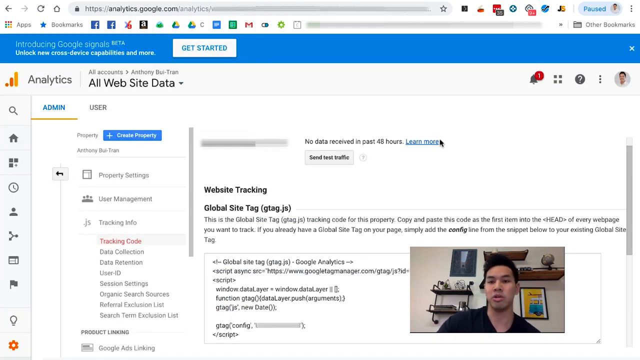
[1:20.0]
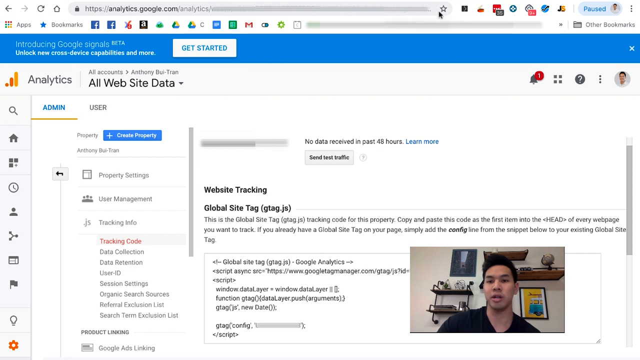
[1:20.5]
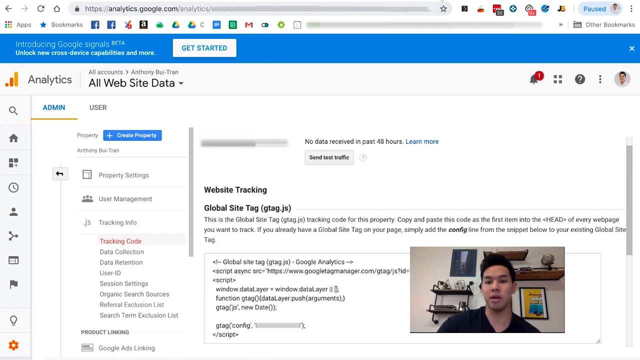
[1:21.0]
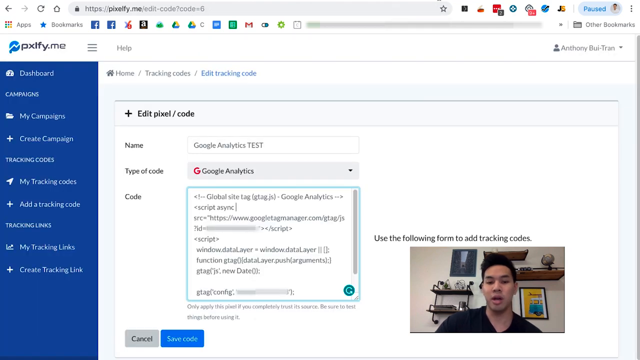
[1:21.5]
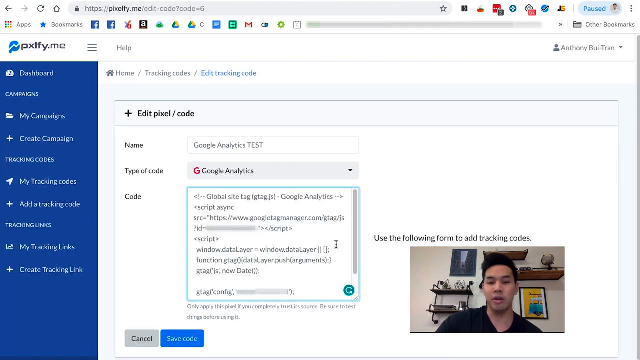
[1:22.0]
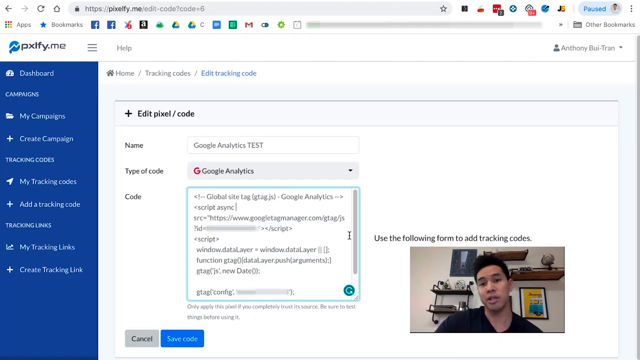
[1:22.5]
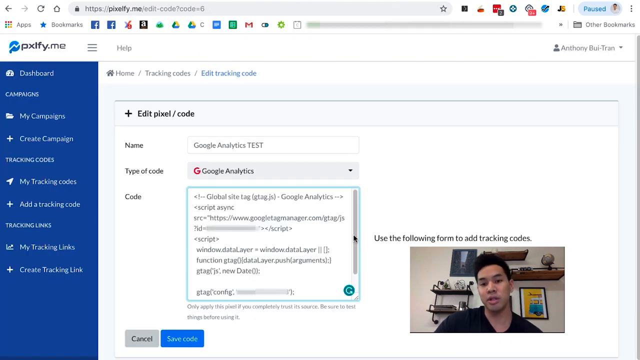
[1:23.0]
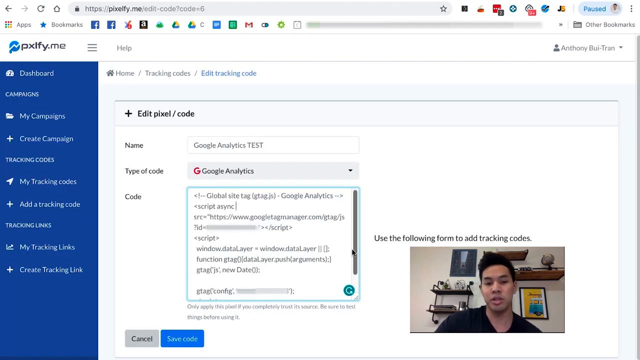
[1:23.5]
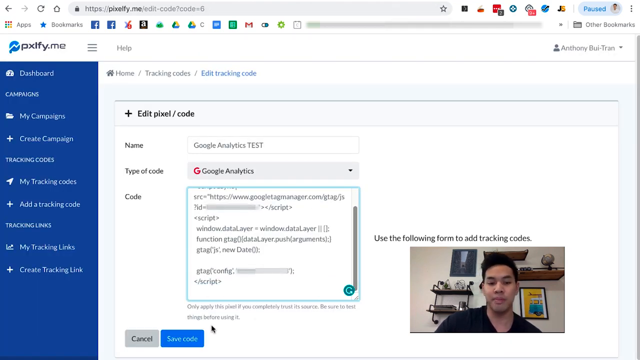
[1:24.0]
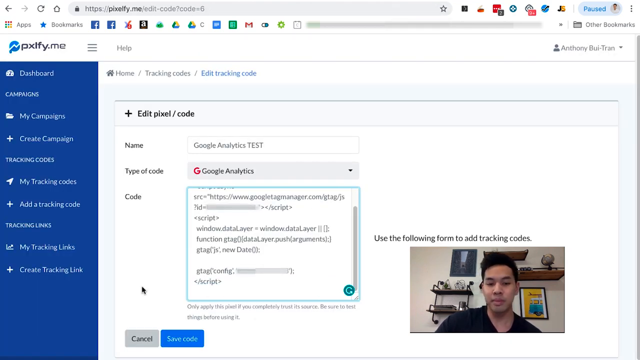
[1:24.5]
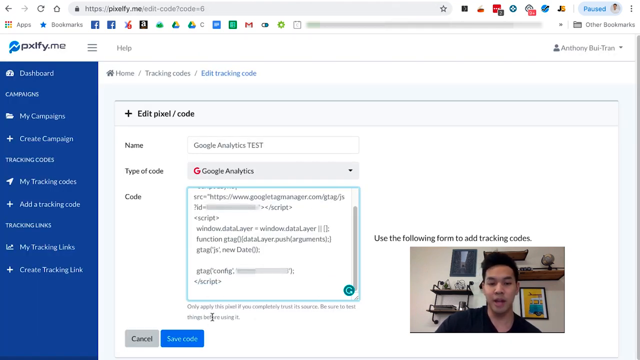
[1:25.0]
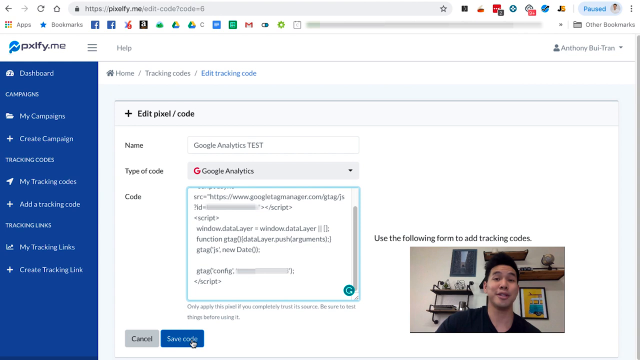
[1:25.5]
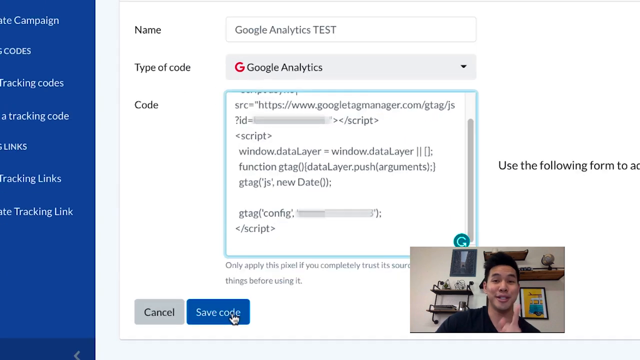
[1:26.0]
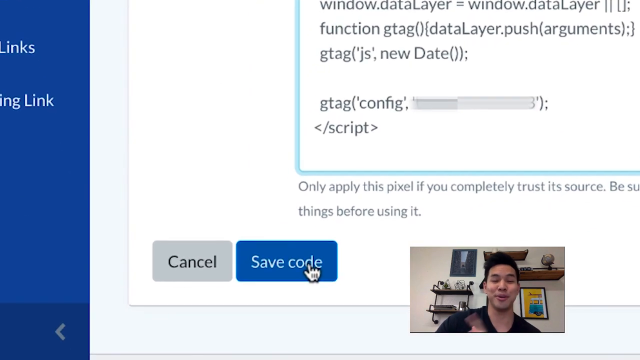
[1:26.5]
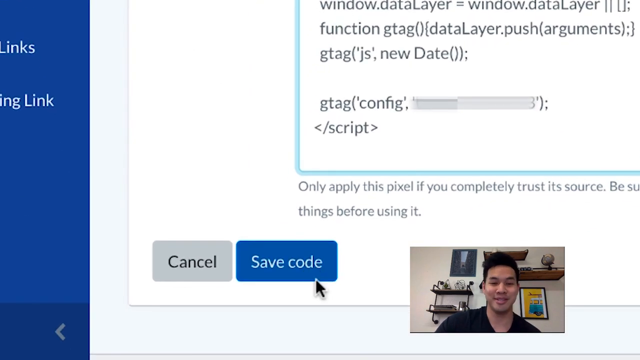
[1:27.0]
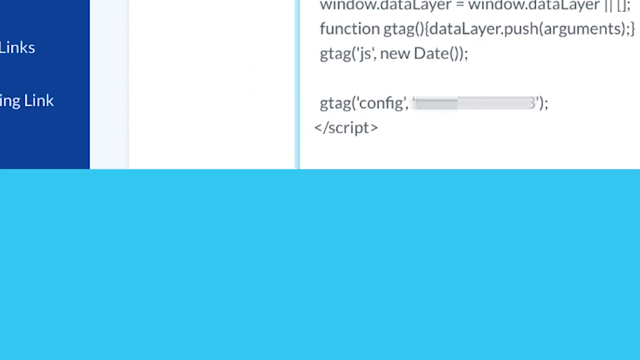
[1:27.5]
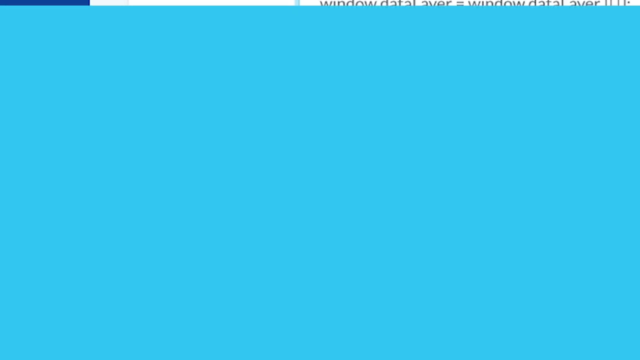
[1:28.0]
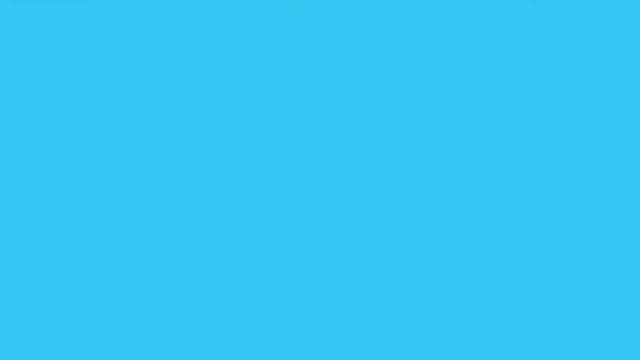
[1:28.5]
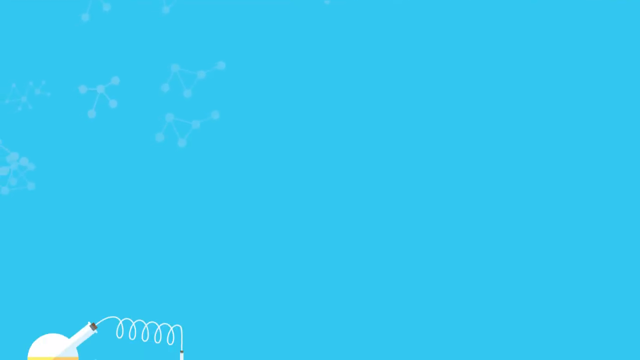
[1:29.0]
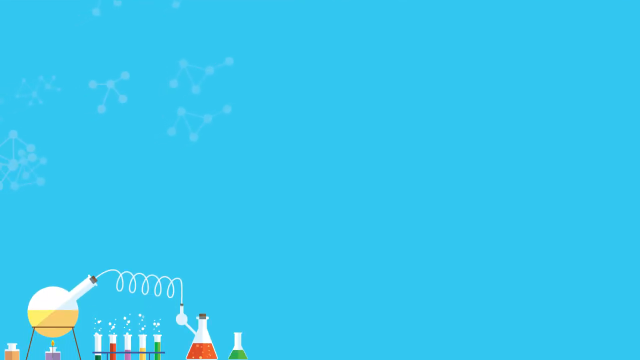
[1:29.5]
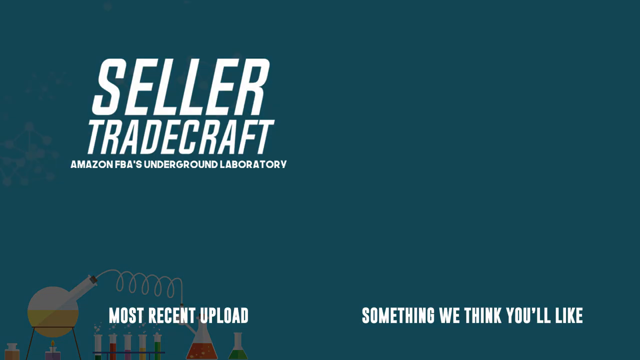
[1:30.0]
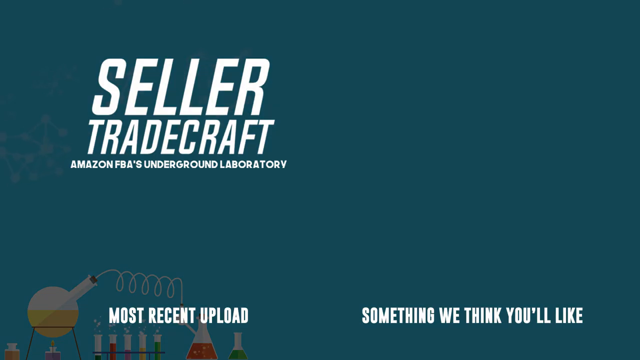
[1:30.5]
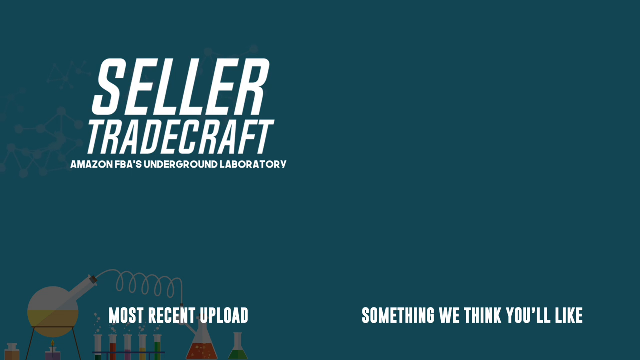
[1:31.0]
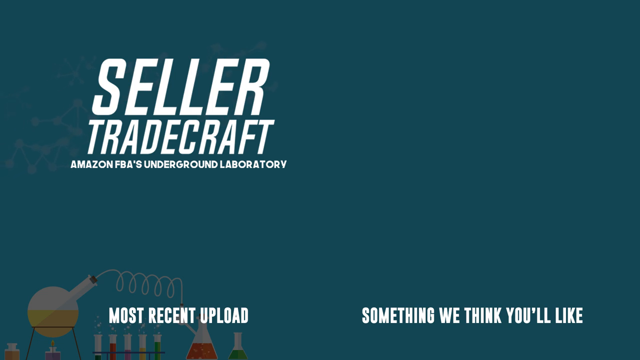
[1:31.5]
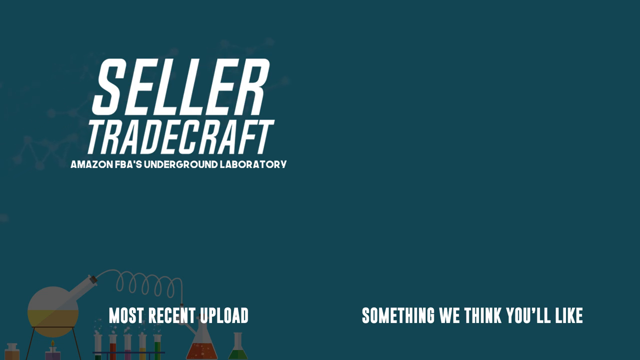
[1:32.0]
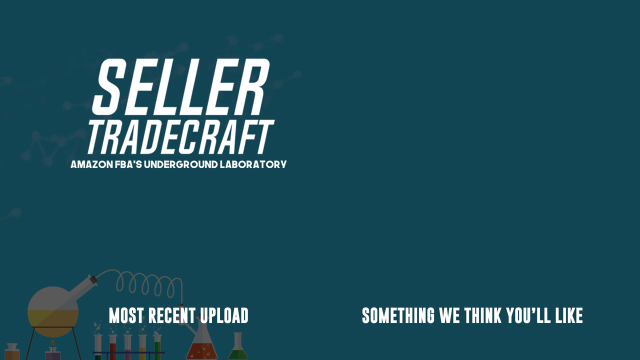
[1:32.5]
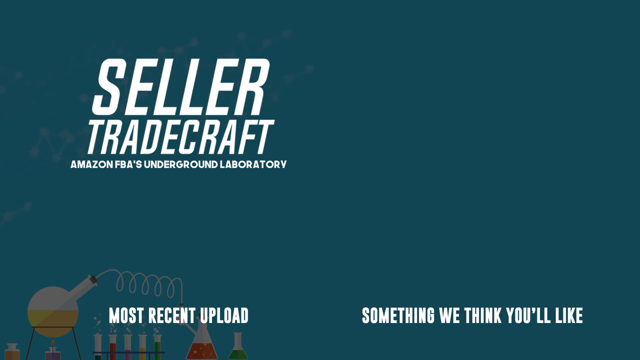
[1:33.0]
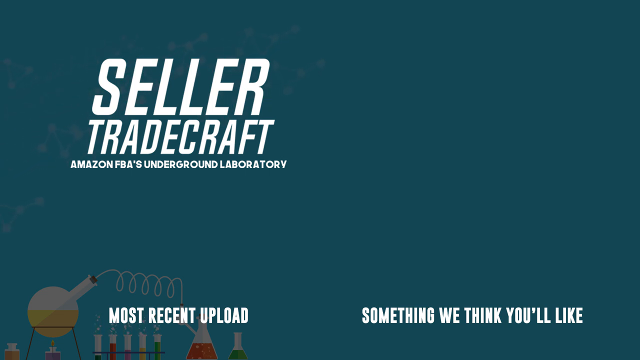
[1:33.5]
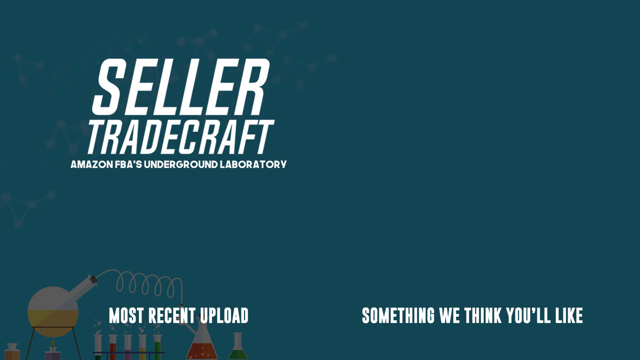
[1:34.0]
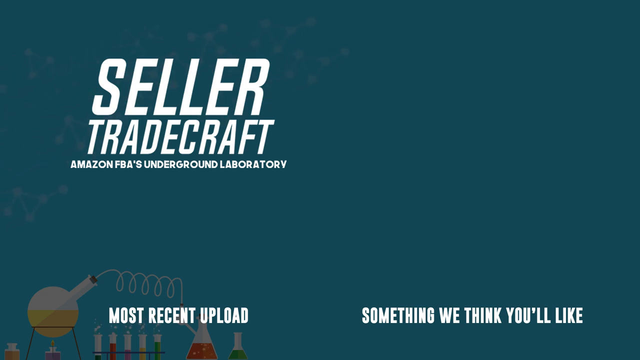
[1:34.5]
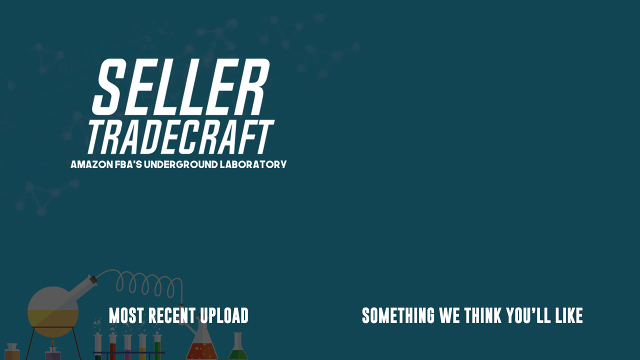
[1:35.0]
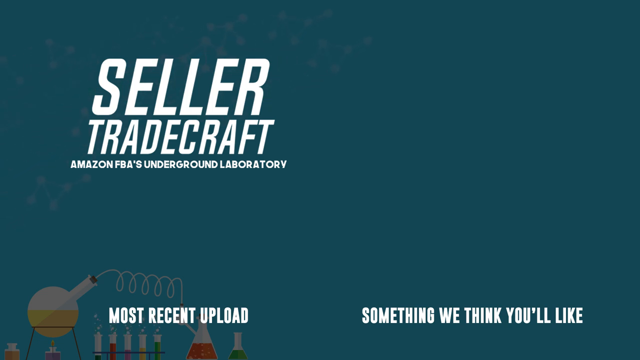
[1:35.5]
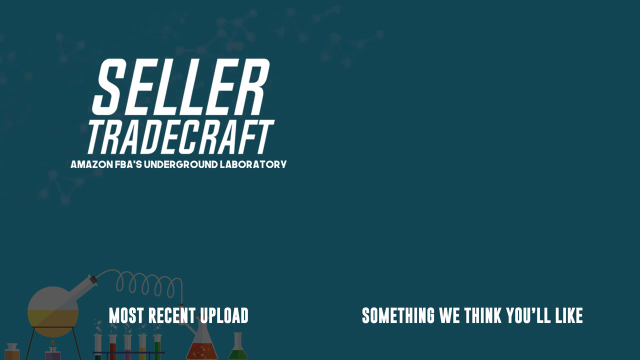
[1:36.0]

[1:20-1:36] A browser shows the Google Analytics website data page with the website tracking JavaScript code. In the bottom right of the screen, a video shows a man with black hair in a black top, with shelving and a white wall behind him, talking into the screen. The mouse moves around and the tab changes to pixelphi.me/edit-code, where the Google Analytics code is also present in a code text box while the man talks to the screen. At the bottom of the screen, a blue save code button is highlighted and the mouse hovers over it. The screen then fades to turquoise, filling the page, with some small linear geometric designs in the top left corner. A title appears in slanted white font in the top left quadrant, reading "Seller Tradecraft Amazon FBA's underground laboratory". In the bottom left, text reading "Most recent upload" is superimposed over stylized laboratory equipment, and in the bottom right, text reads "Something we think you'll like". This image stays relatively stationary for several seconds until the end of the video.